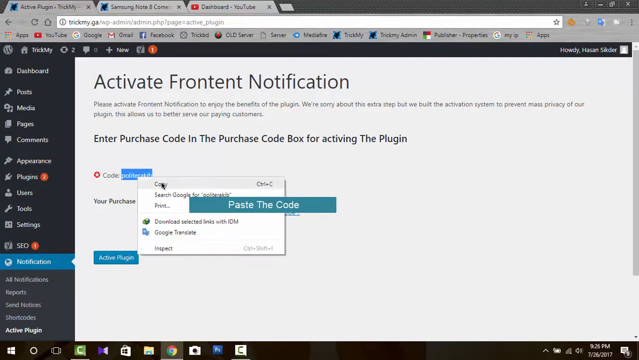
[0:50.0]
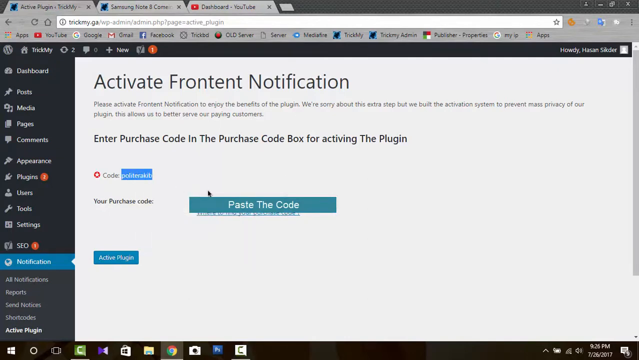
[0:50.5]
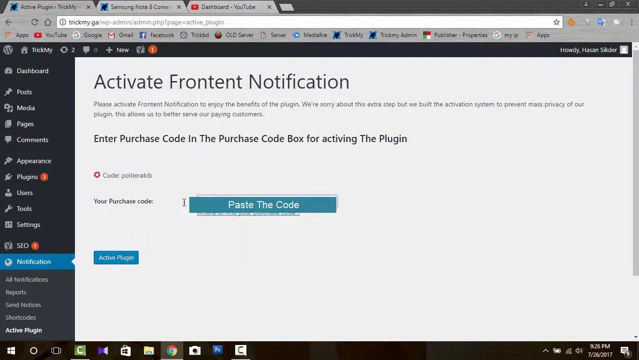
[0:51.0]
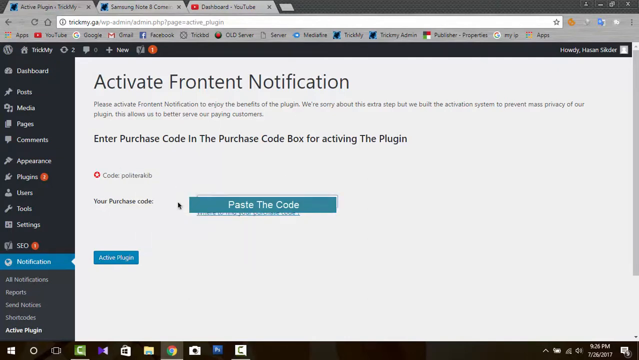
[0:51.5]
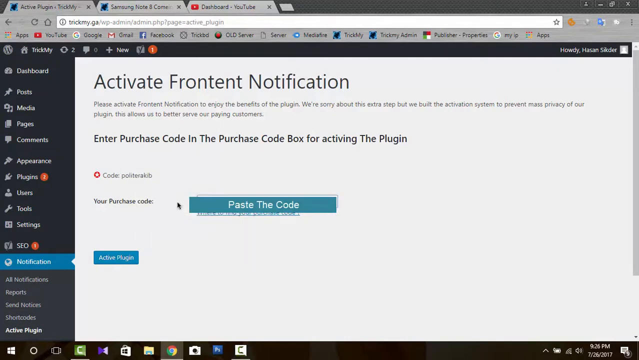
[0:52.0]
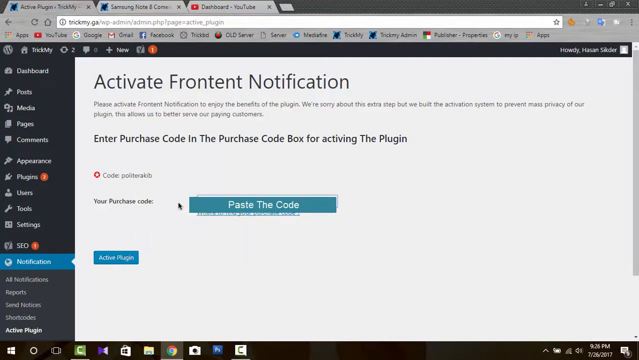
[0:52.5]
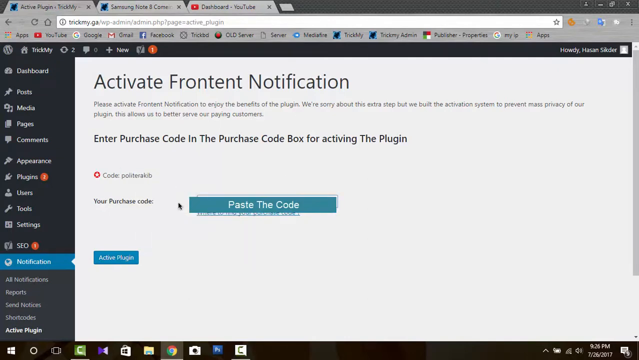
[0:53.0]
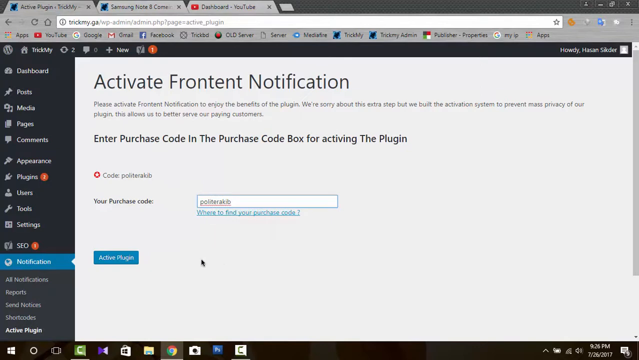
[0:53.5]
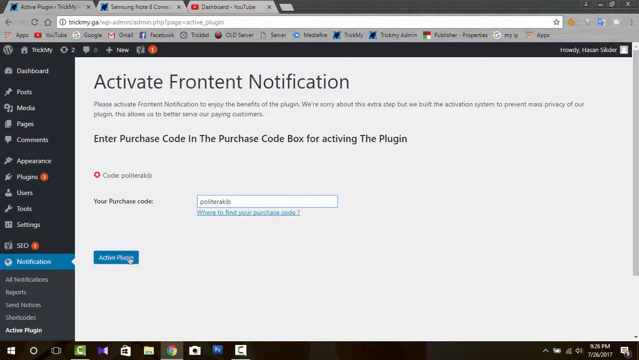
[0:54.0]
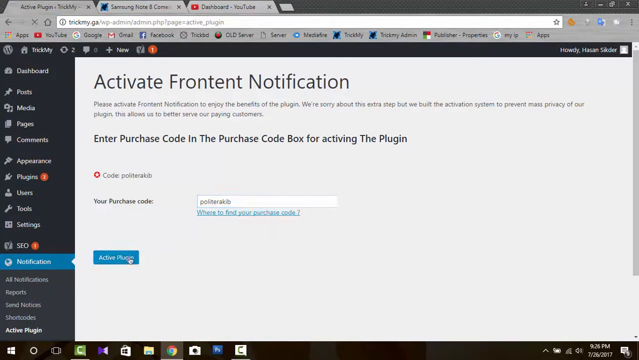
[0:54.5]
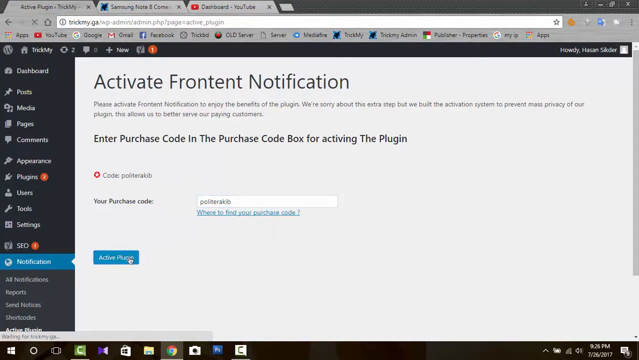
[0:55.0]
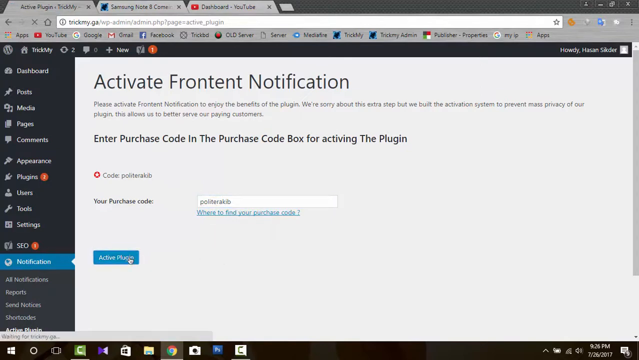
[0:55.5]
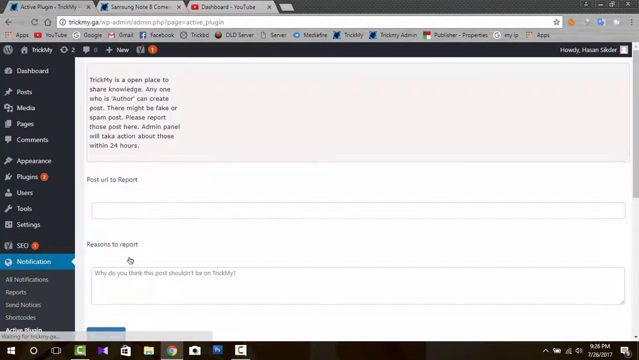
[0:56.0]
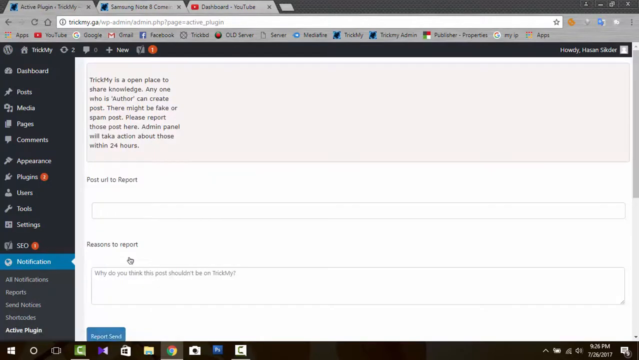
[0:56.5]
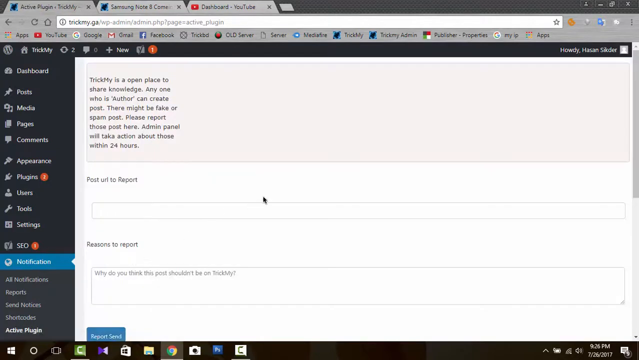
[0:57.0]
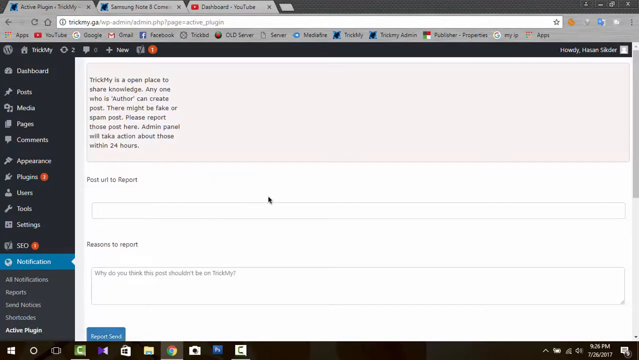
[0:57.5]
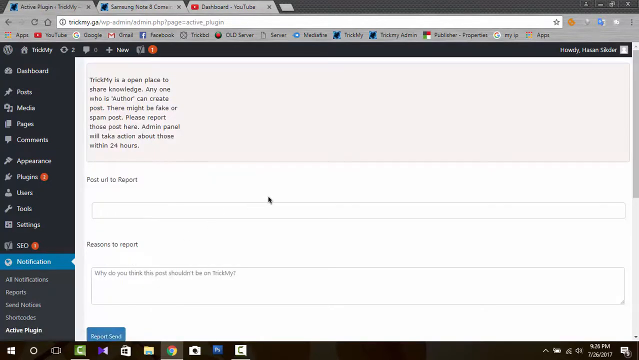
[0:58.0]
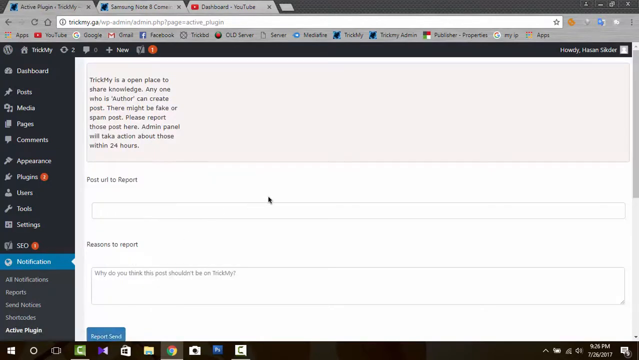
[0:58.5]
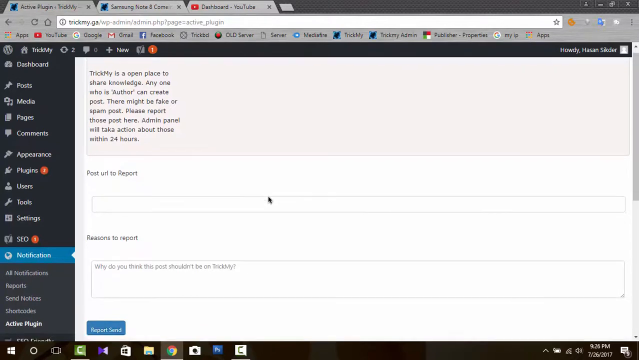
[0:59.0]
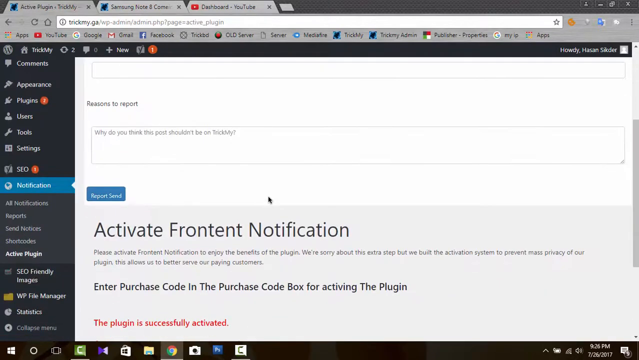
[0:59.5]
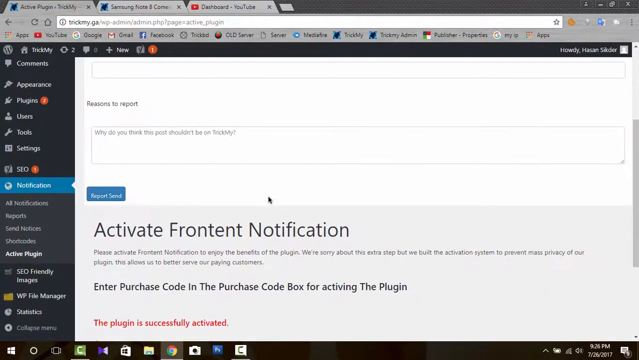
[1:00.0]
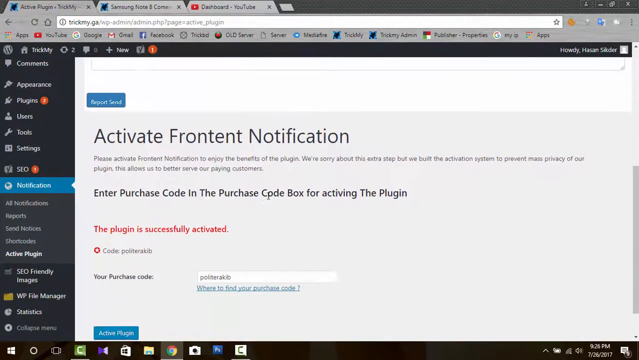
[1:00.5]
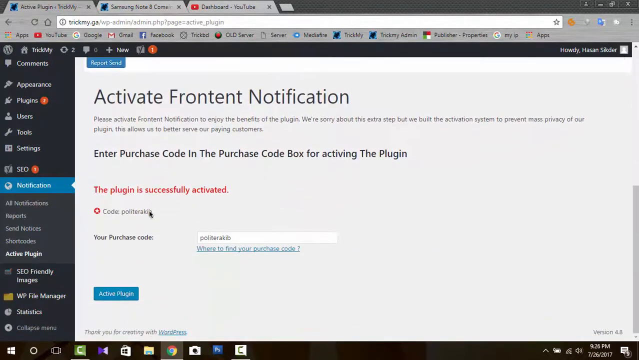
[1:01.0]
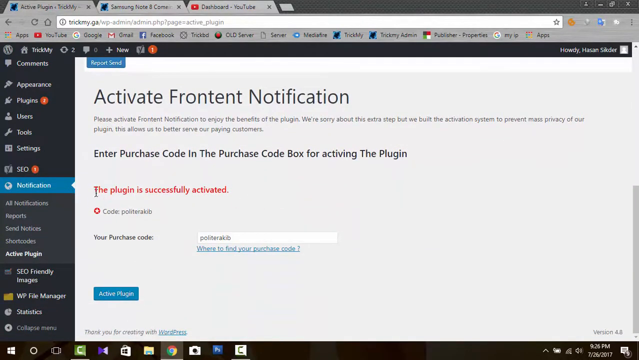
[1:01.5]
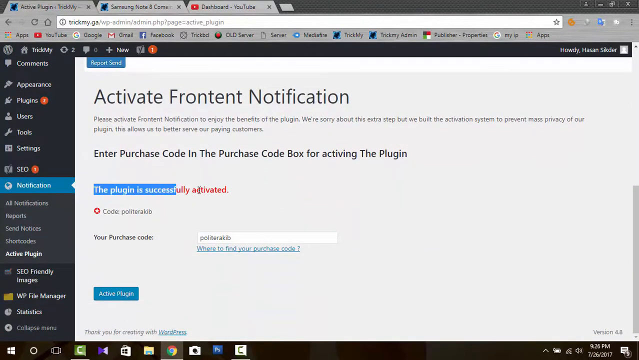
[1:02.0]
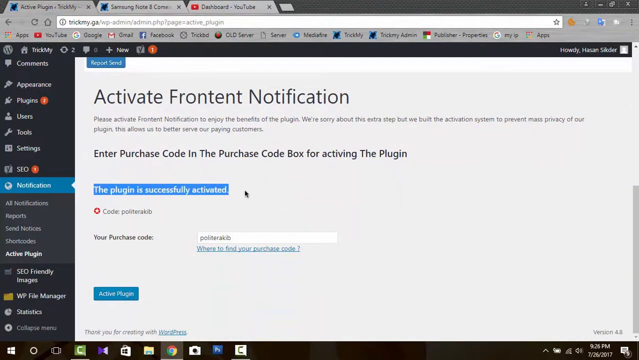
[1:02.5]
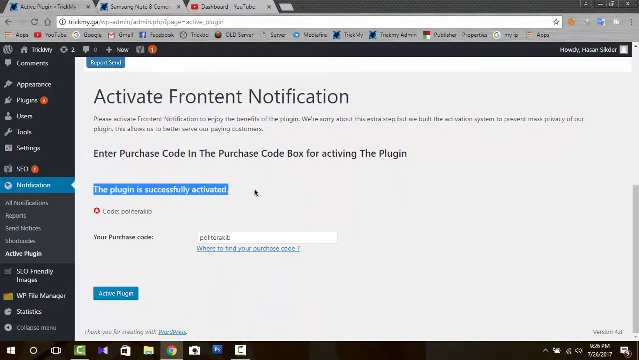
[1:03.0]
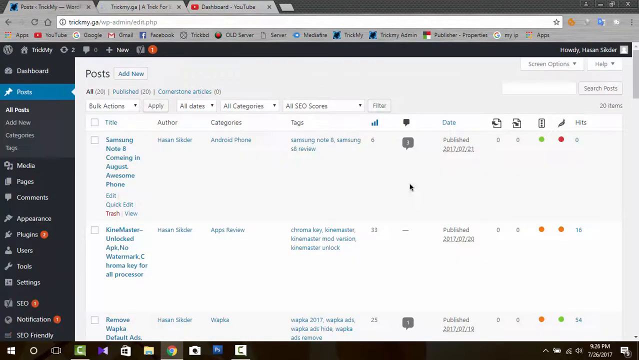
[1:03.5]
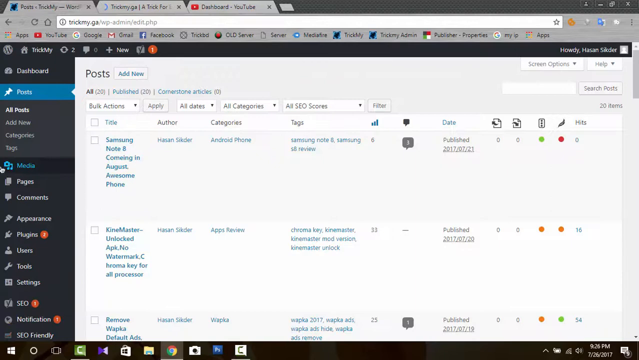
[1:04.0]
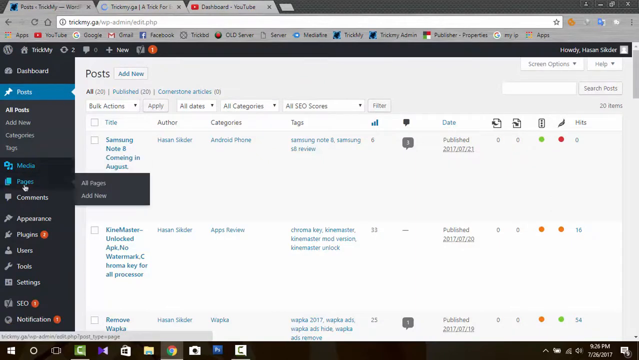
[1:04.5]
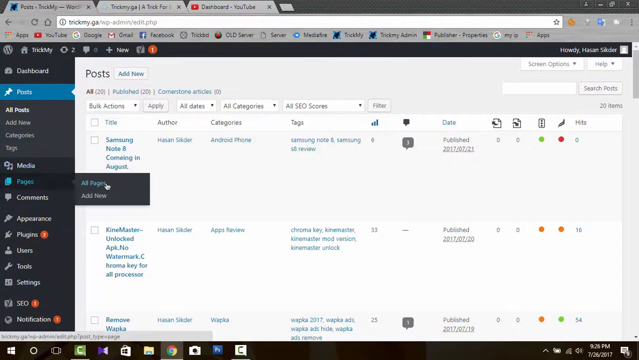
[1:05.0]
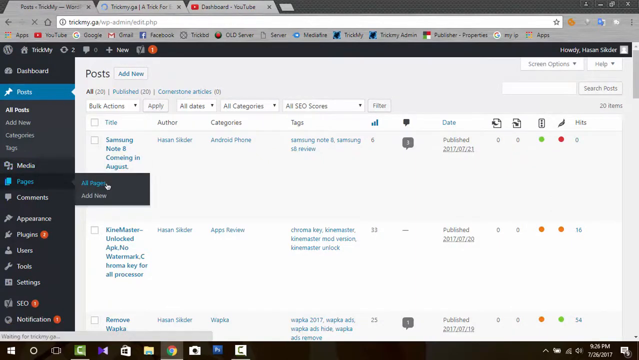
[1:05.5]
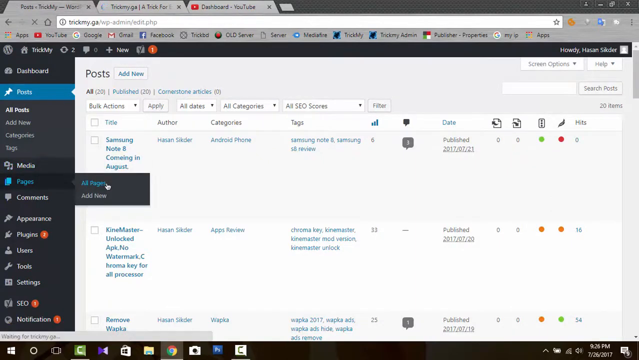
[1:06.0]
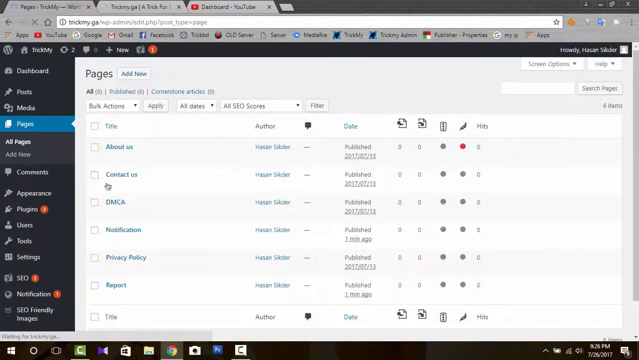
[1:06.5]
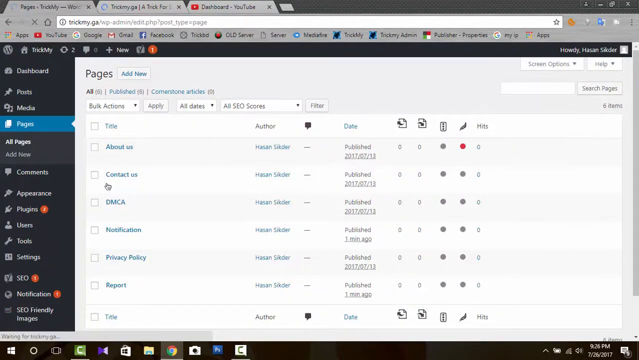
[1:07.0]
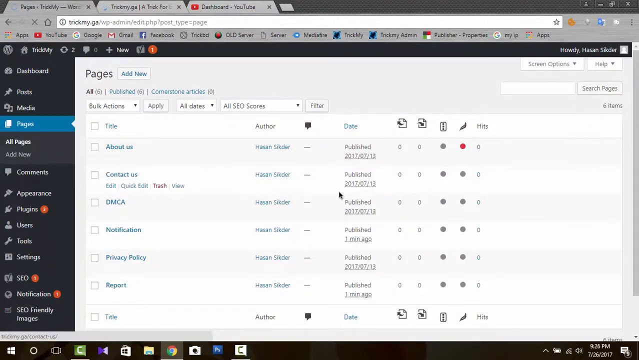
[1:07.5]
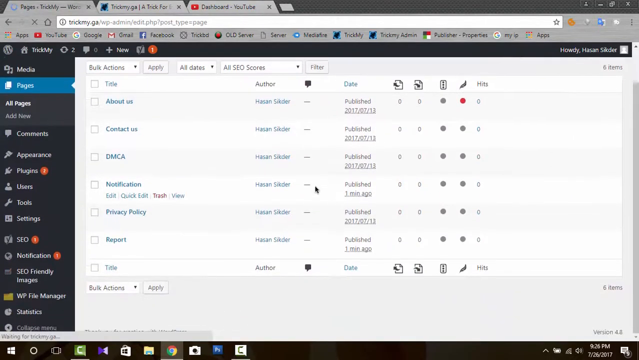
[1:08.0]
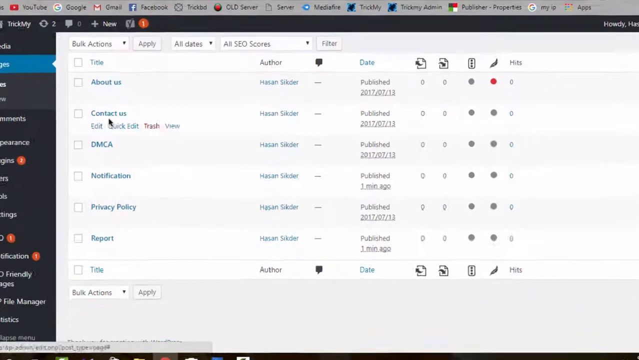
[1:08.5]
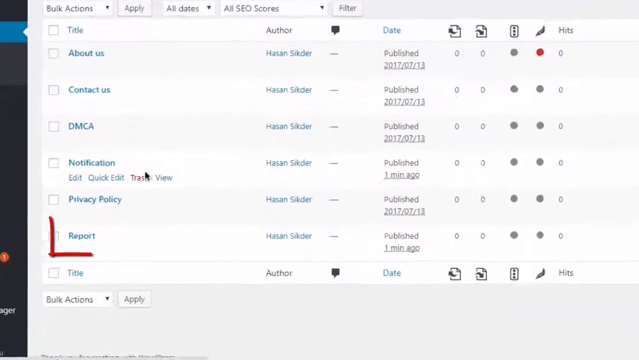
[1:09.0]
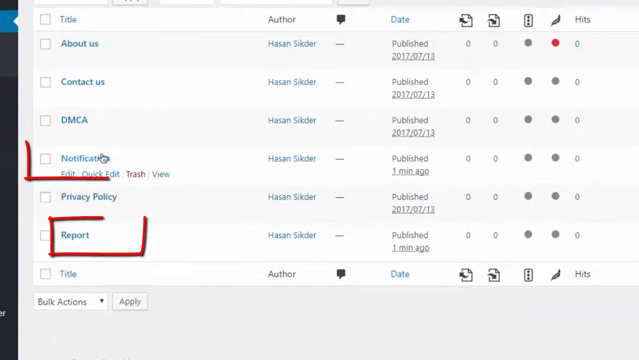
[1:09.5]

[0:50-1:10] The user pastes the copied text into an open field on the page; to its left is text that says "your purchase code". They click the activate plugin button, and another page opens saying "the plug-in is successfully activated". They highlight this text, then move the cursor to the left side, select the pages option and click all pages, browsing through the pages. Red lines are drawn in rectangular shapes around the report area and the notification area. At the top, three tabs are open: the left one is called "Active Plugin", the middle one "Samsung Note 8", and the right one is a YouTube tab called "Dashboard YouTube".